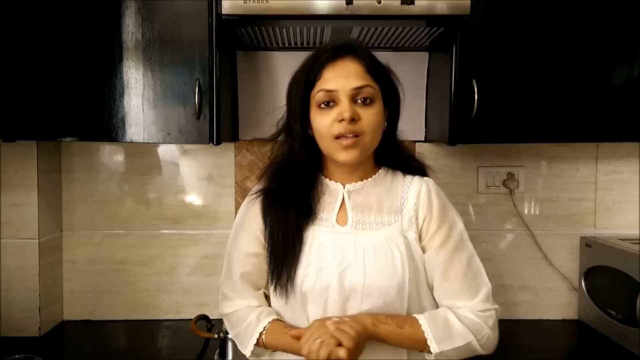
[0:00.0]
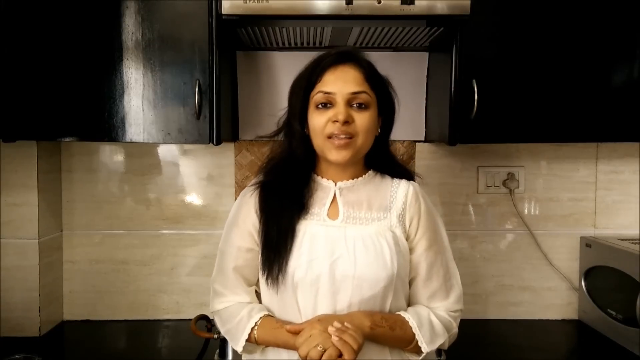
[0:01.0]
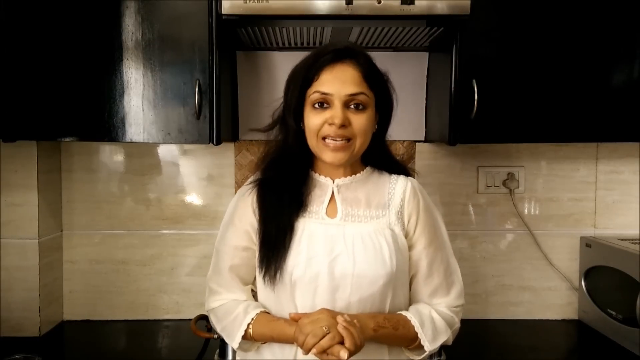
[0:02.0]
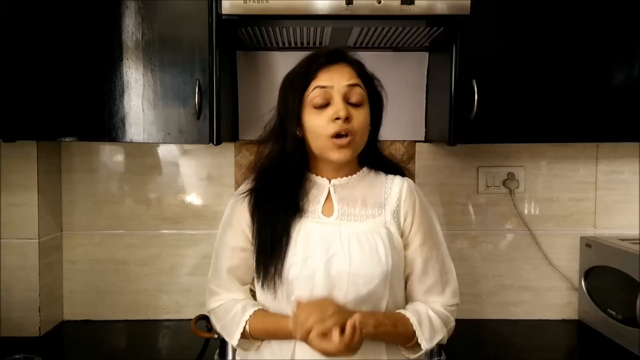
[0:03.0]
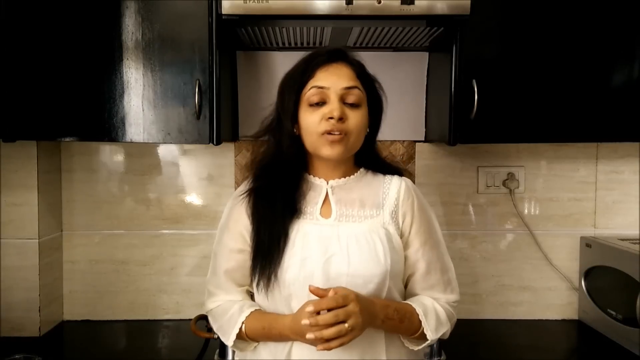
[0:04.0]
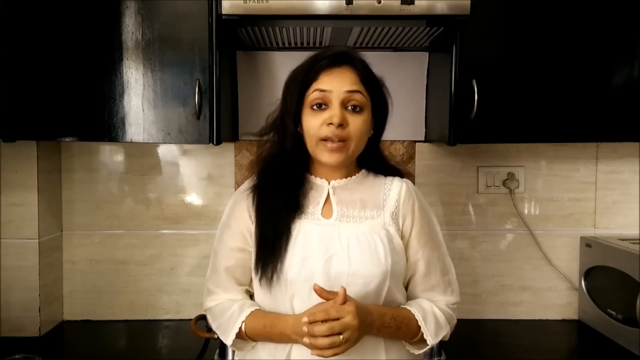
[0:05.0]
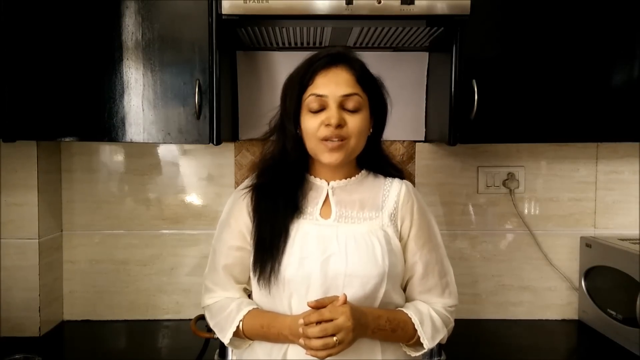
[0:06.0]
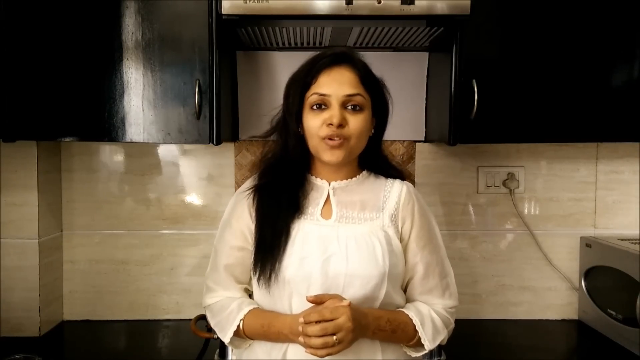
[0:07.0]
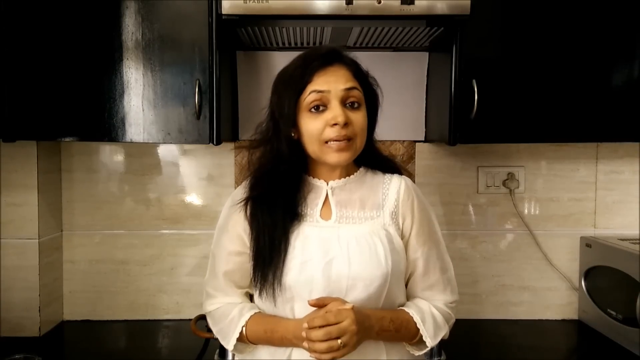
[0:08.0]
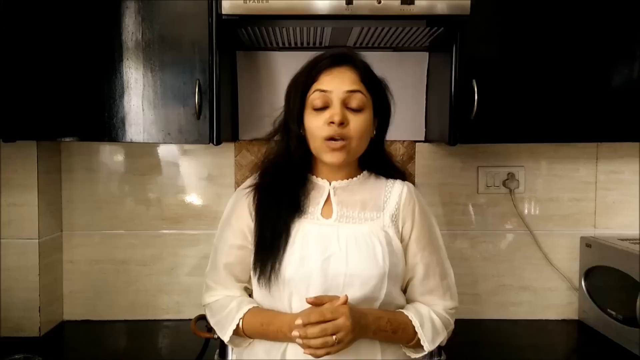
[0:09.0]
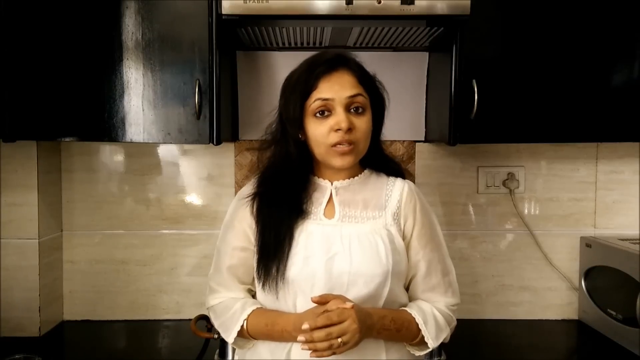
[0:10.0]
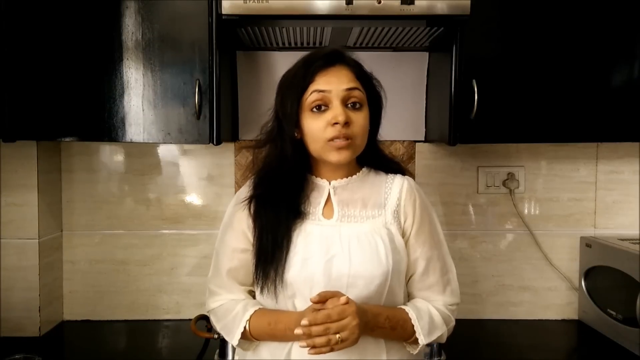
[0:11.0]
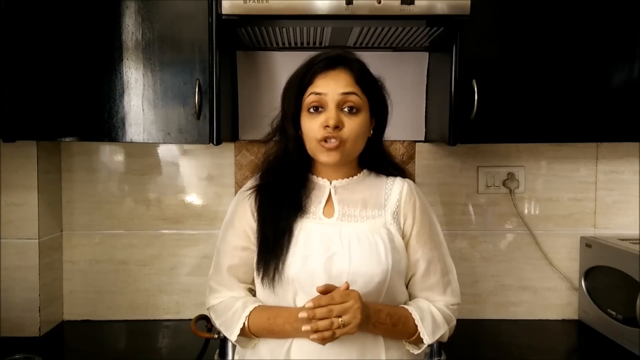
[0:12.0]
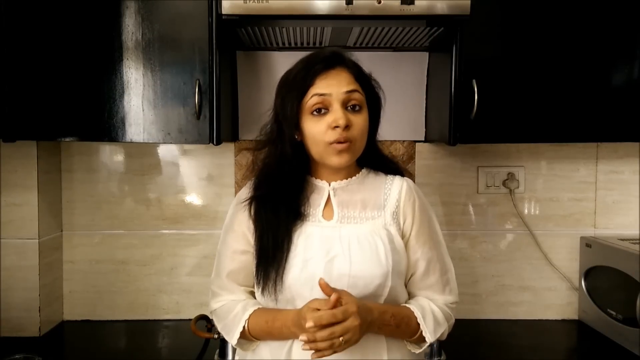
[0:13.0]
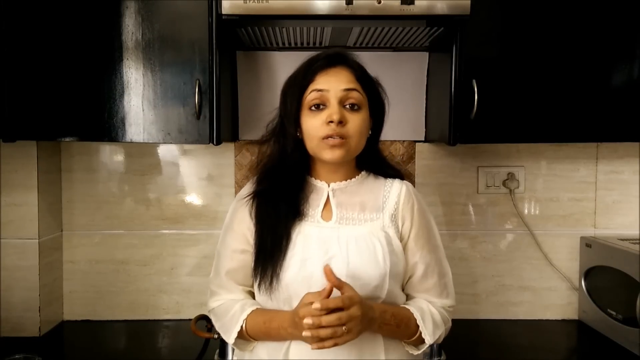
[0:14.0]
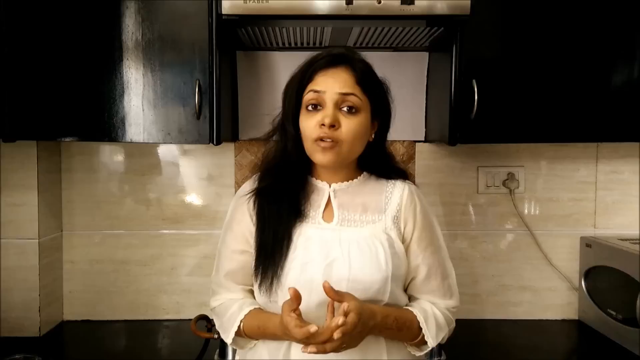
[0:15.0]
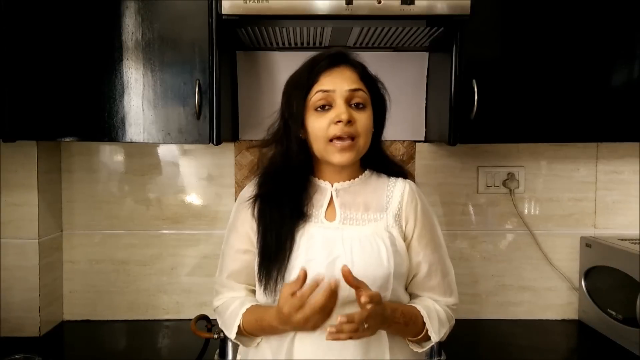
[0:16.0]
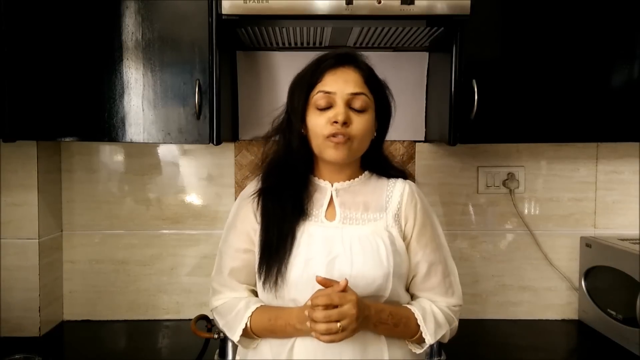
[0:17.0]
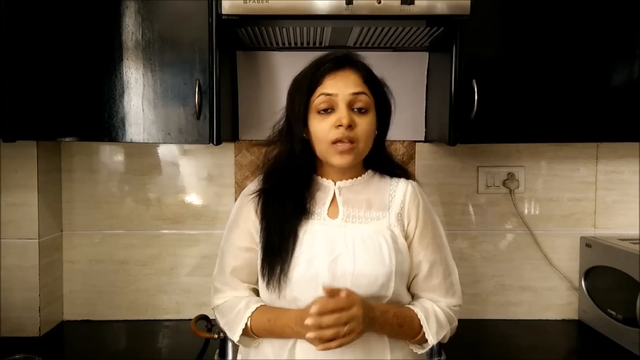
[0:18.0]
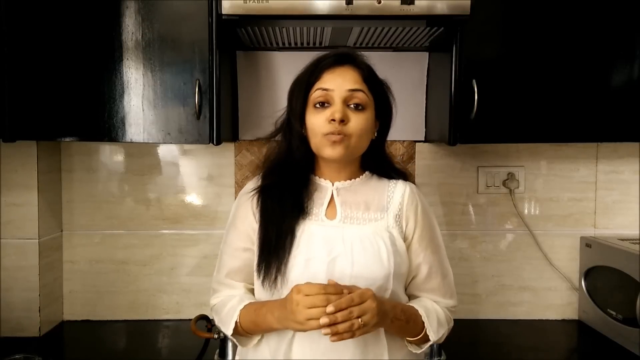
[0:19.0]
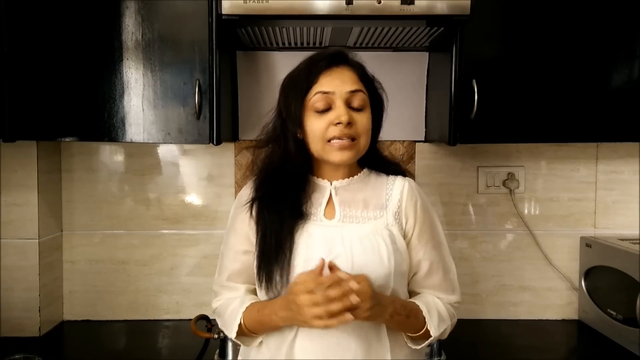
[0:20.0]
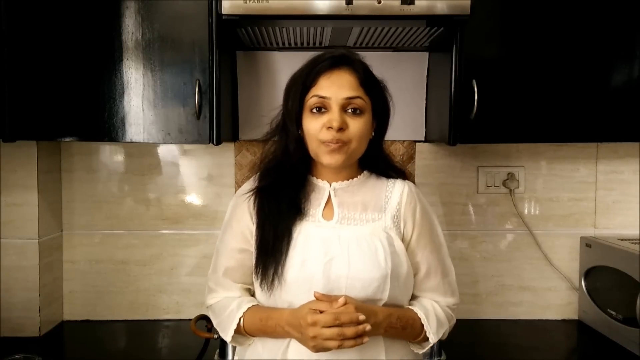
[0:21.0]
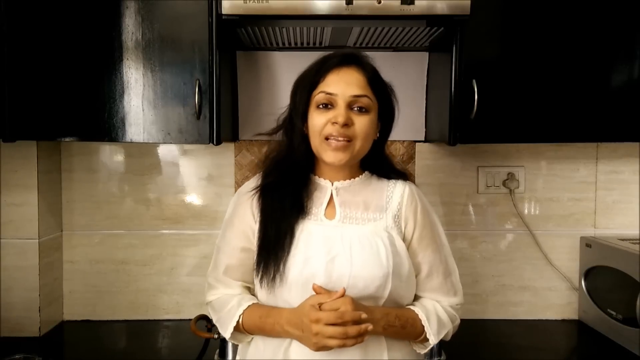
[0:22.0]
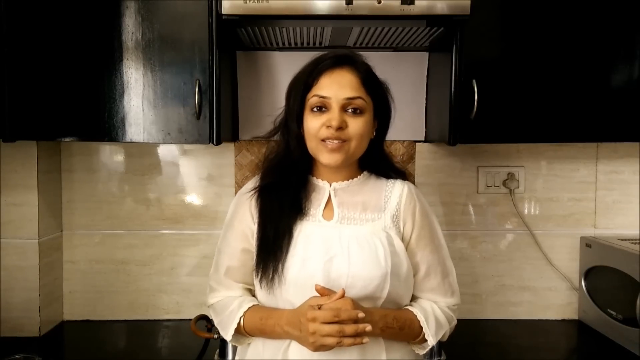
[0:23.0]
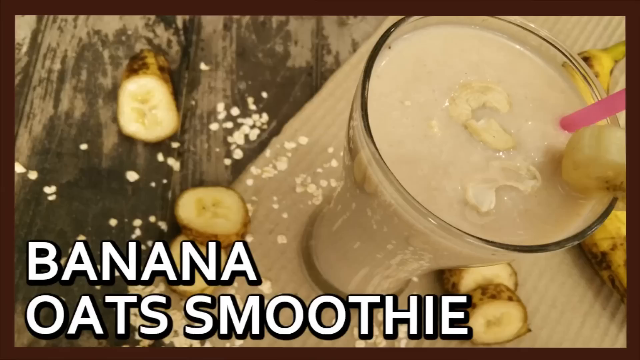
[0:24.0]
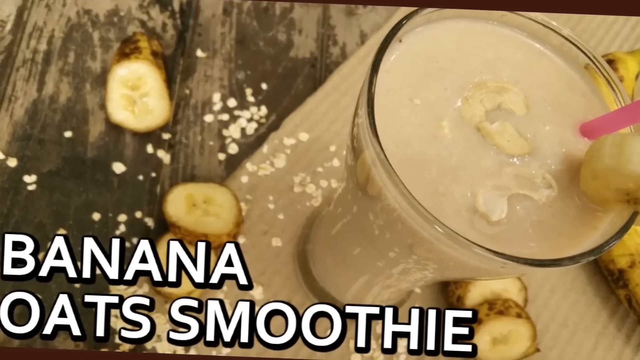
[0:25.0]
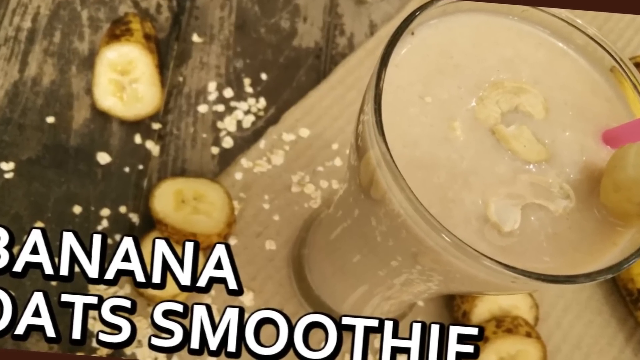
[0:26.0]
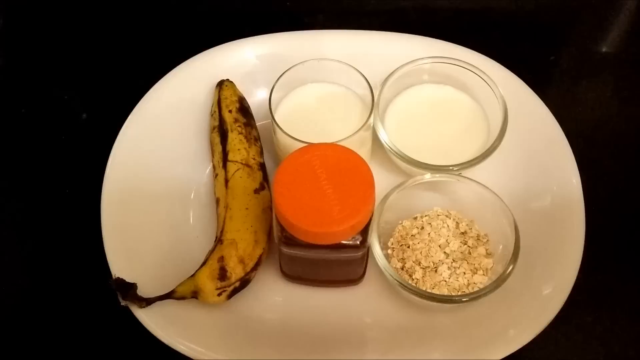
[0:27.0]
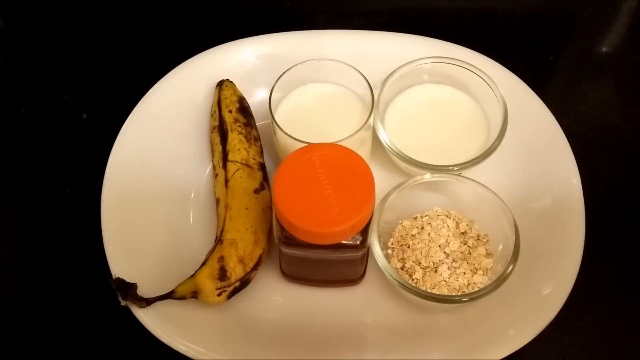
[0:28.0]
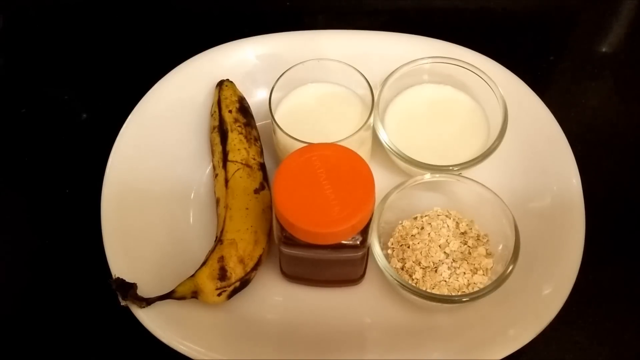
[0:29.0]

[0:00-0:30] A young woman with long black hair speaks to the camera. She wears a white dress, some gold bangles on her wrist and a ring. Behind her is a fancy-looking kitchen with black cupboards and white marble, sort of glass tiles, and a toaster, plugged in, is in the background. She speaks to the camera in an informative way, smiling a lot and using her hands expressively to make her point, opening them up and putting them back together. Text on the screen then reads "Banana Oats Smoothie" alongside a picture of a smoothie with cut-up banana pieces and a pink straw inside the smoothie glass. The camera then zooms in on a white plate with a banana and some other ingredients on it, against a black background.